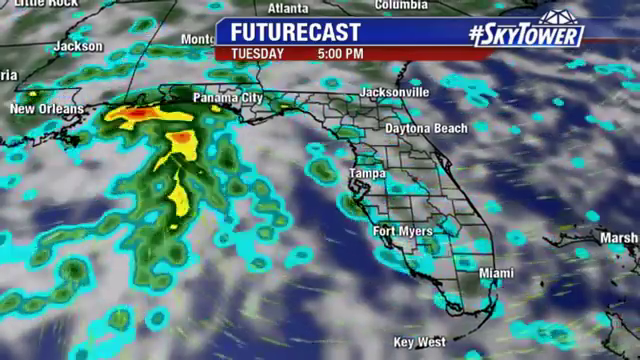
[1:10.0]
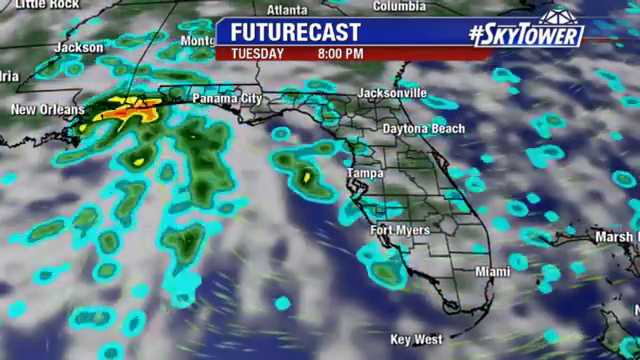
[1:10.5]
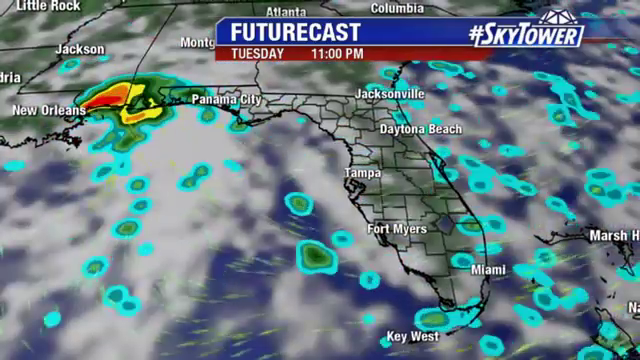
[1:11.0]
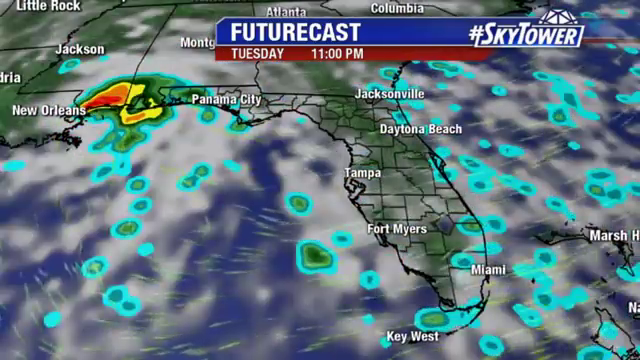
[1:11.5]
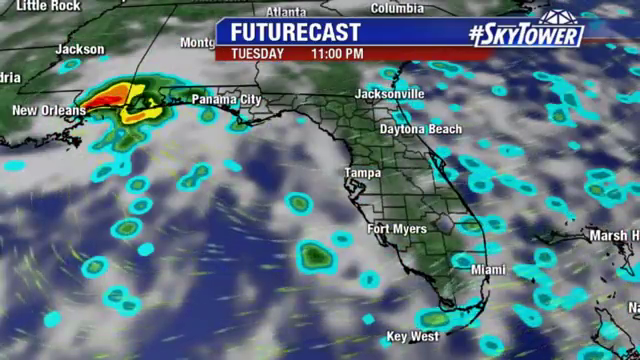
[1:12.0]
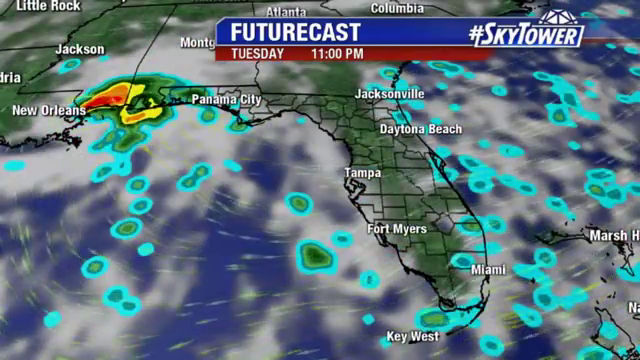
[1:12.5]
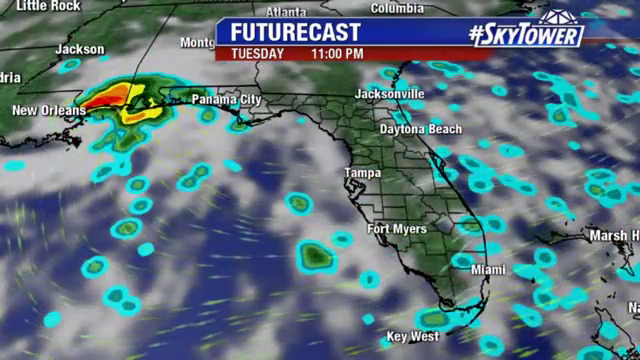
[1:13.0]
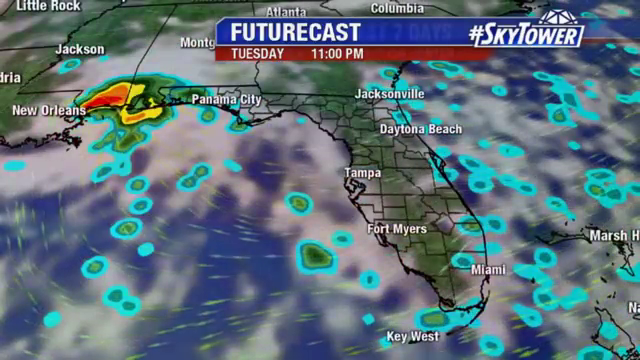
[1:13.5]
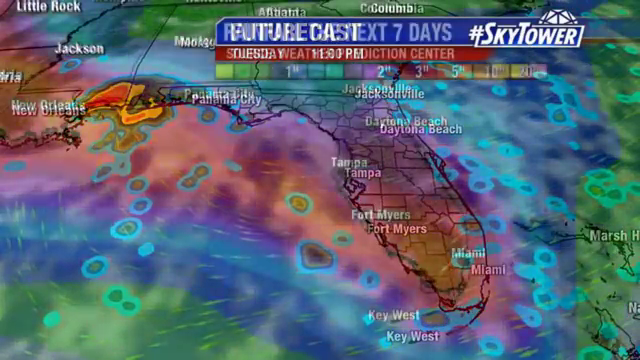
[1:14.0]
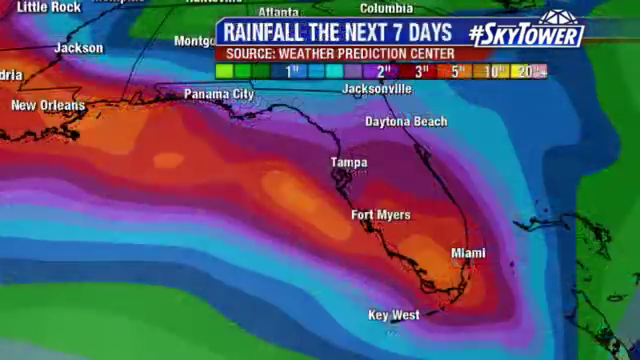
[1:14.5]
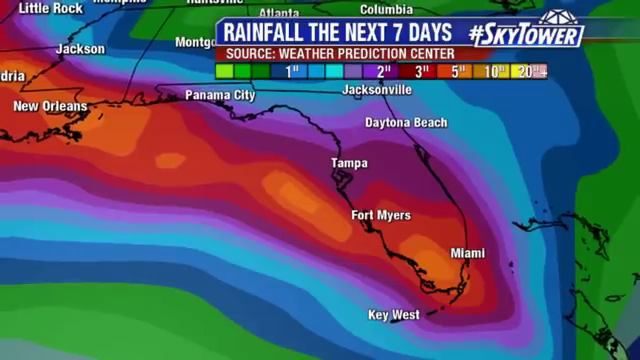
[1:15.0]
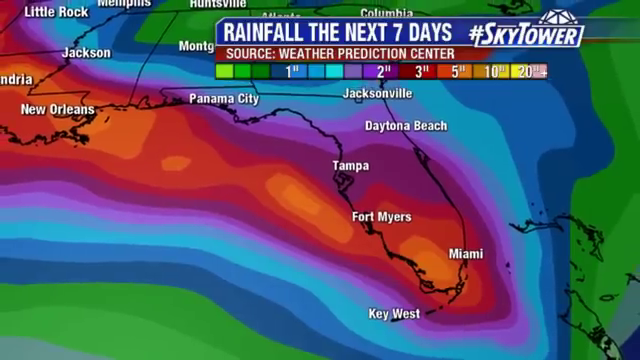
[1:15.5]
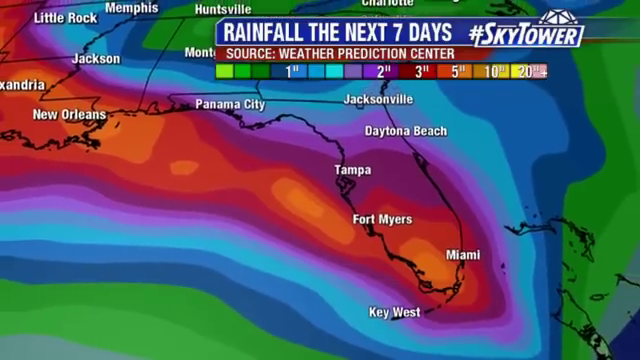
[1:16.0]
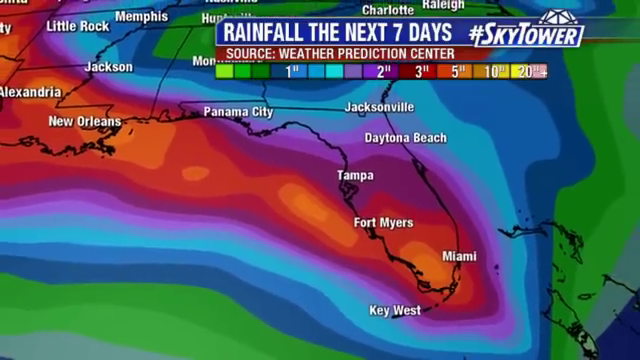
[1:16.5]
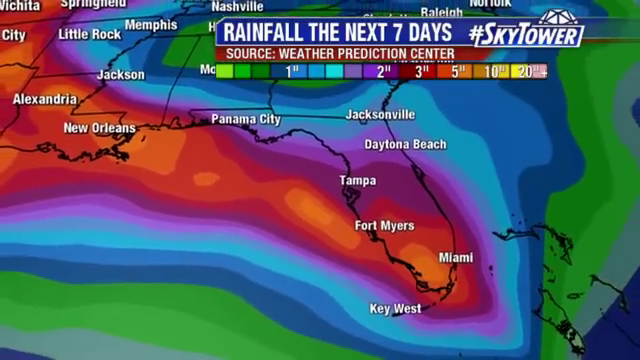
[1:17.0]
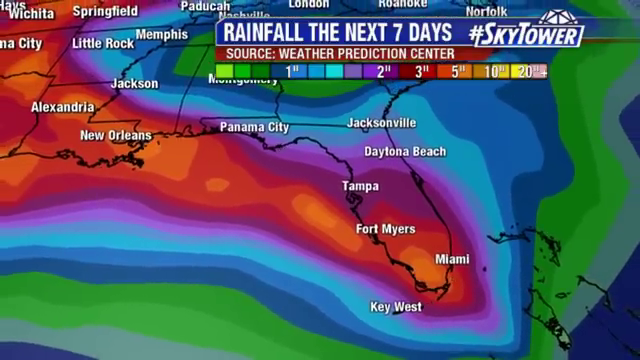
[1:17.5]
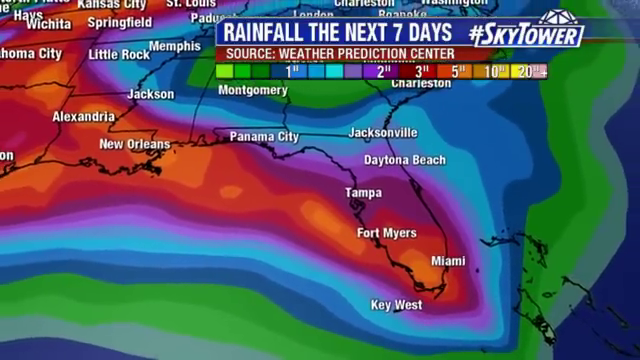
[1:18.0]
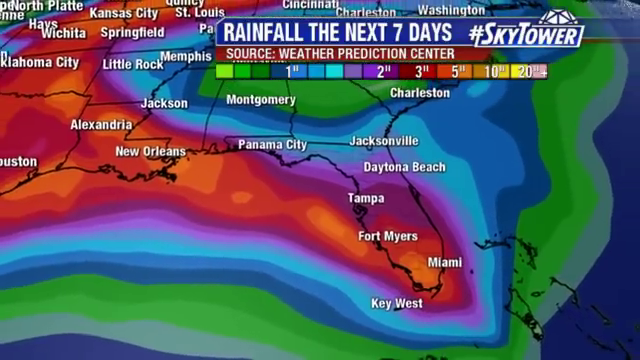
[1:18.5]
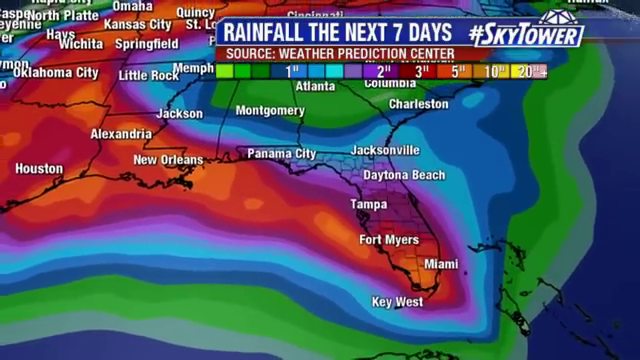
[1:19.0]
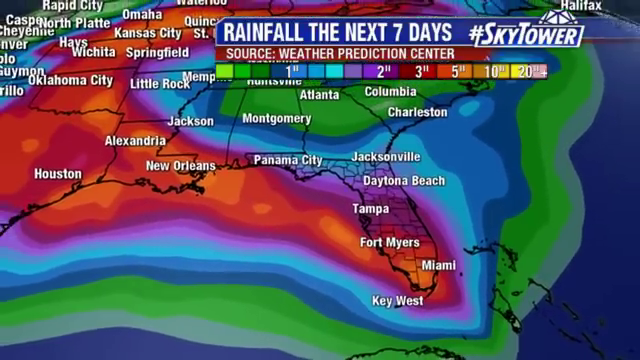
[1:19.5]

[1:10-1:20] A future cast weather radar focused on the state of Florida shows a prediction of upcoming weather patterns. Areas of green and yellow, indicating moisture and rain, spin and move in a counterclockwise direction in the Gulf just off the coast of Mississippi. As the video advances, the system turns counterclockwise up into Mississippi. Many small white dashes move from east to west across the map, and turquoise and green blobs represent other types of weather.